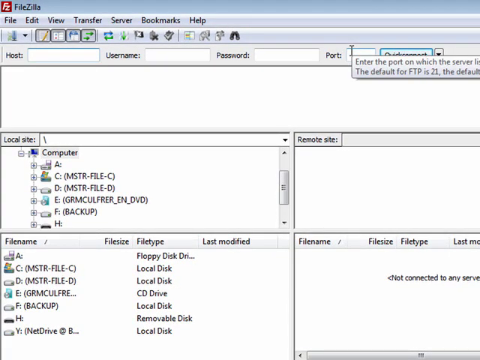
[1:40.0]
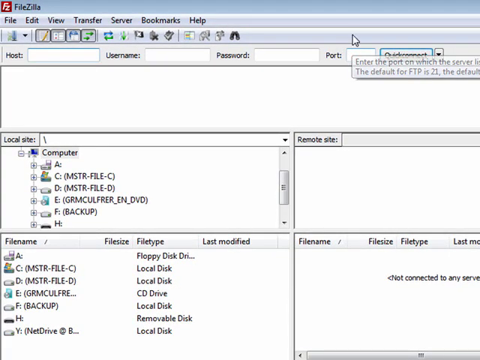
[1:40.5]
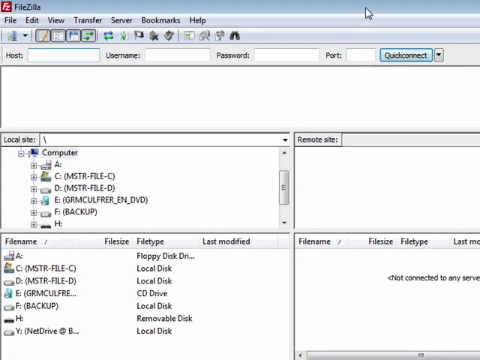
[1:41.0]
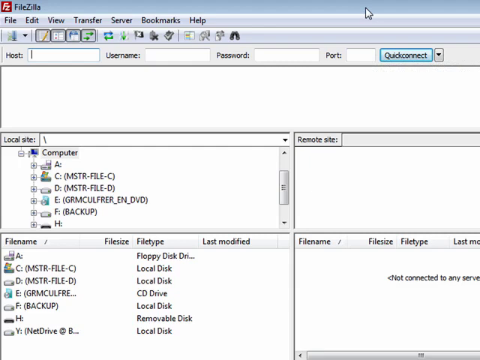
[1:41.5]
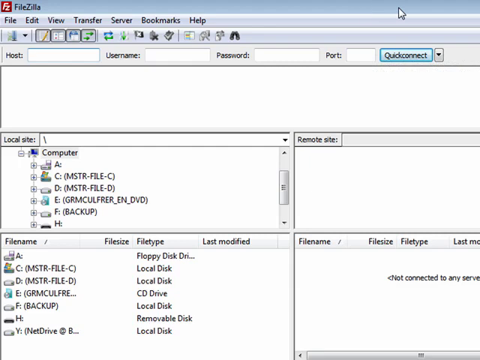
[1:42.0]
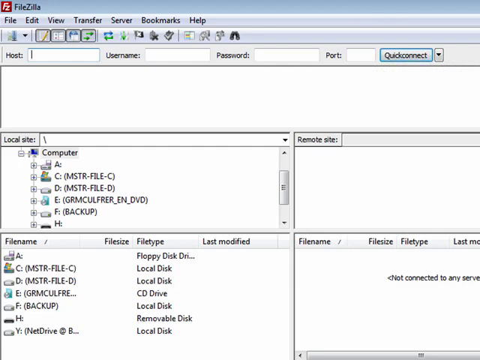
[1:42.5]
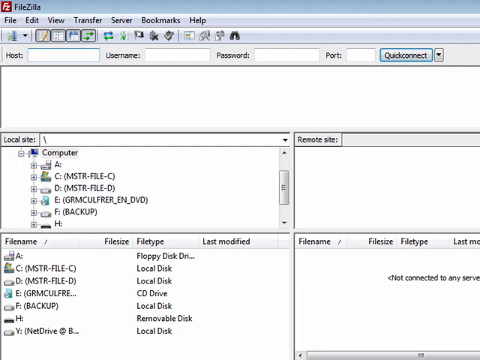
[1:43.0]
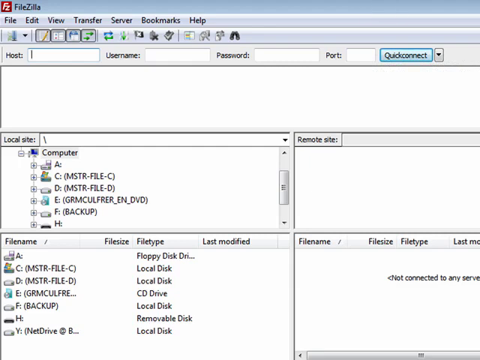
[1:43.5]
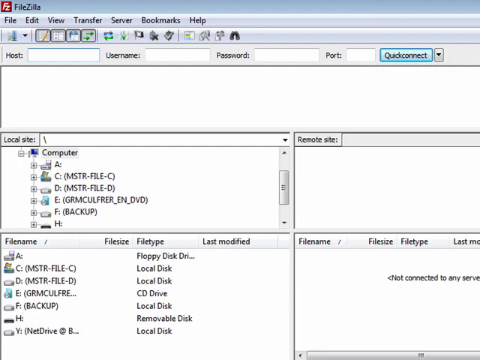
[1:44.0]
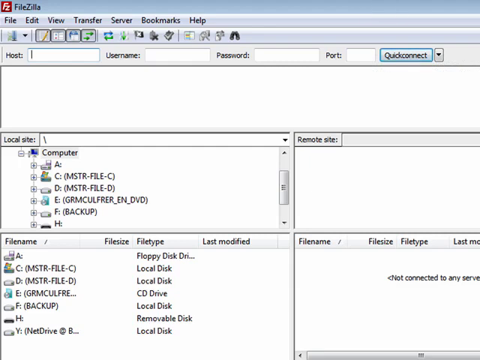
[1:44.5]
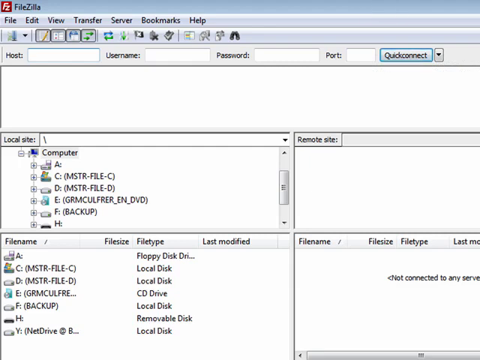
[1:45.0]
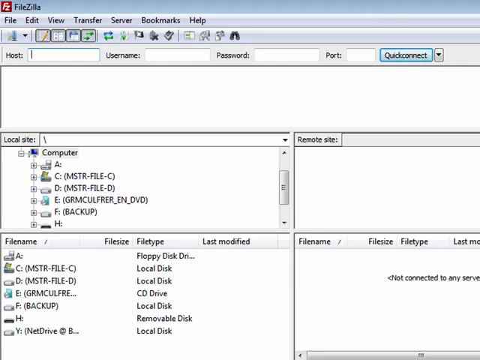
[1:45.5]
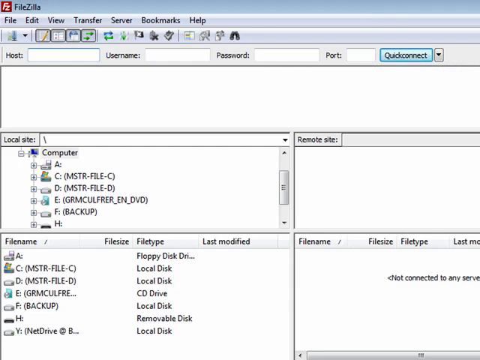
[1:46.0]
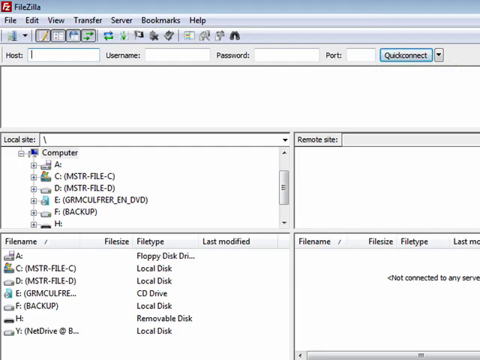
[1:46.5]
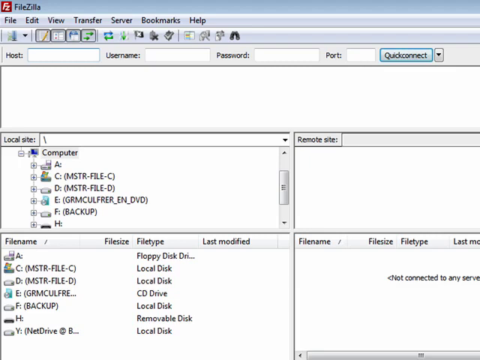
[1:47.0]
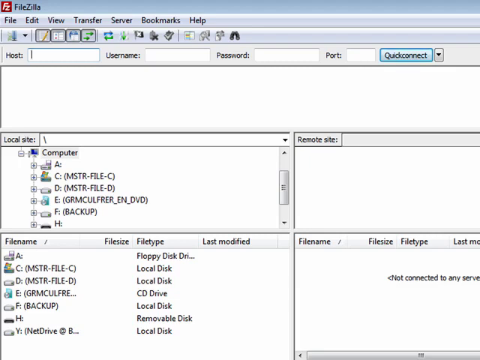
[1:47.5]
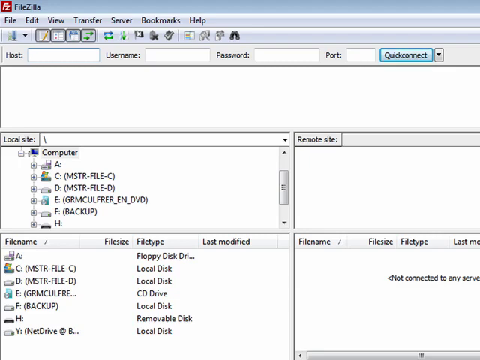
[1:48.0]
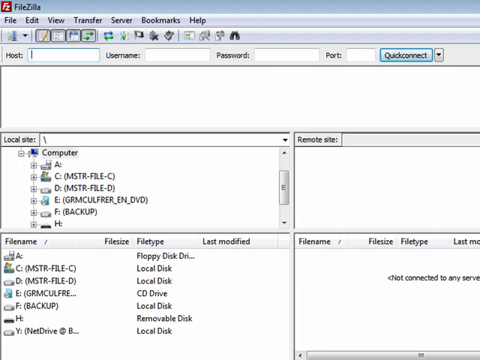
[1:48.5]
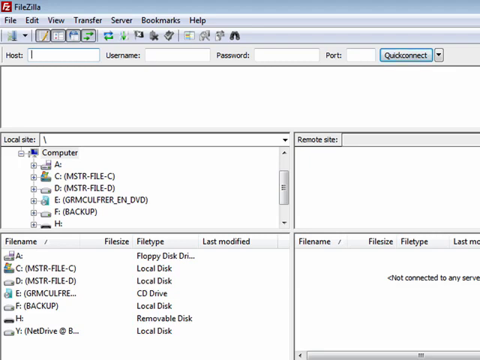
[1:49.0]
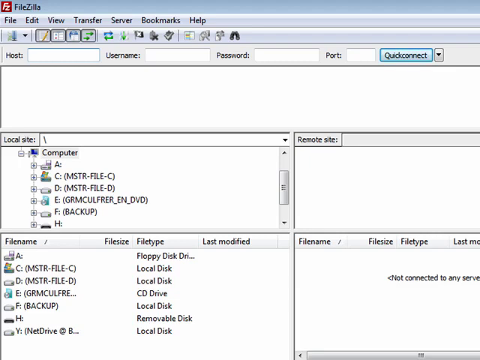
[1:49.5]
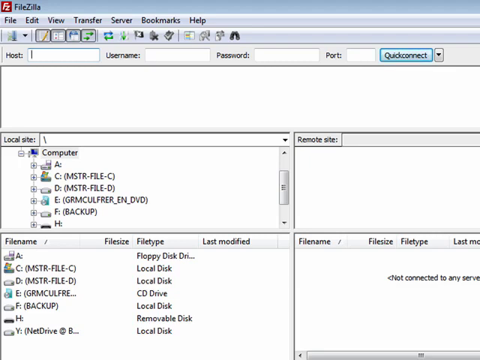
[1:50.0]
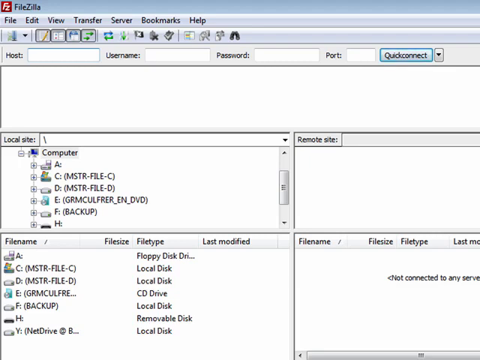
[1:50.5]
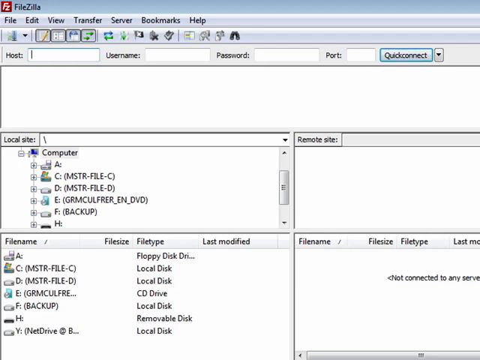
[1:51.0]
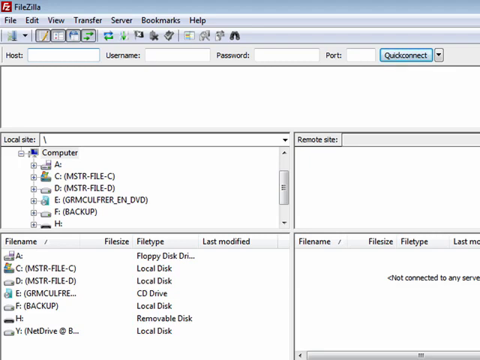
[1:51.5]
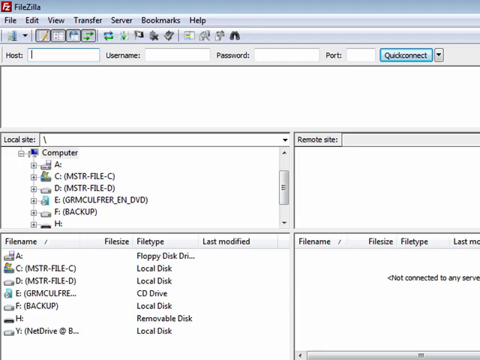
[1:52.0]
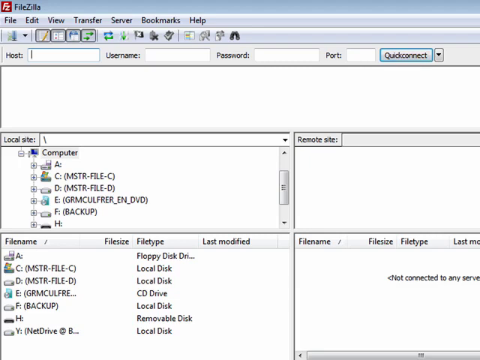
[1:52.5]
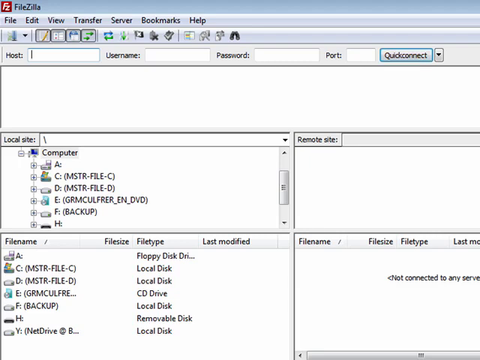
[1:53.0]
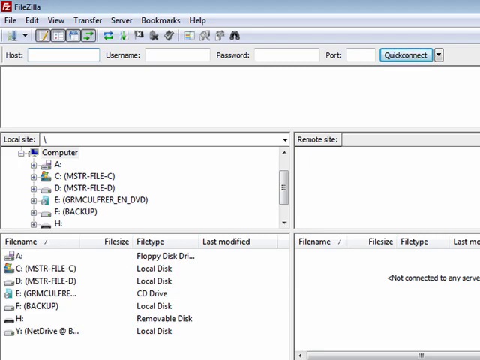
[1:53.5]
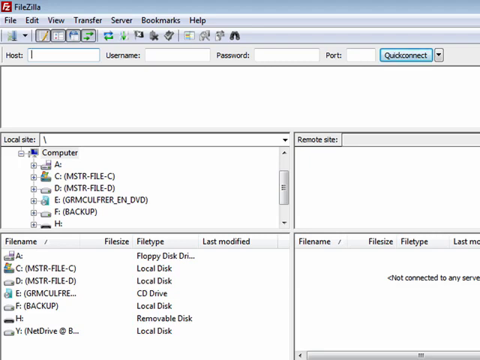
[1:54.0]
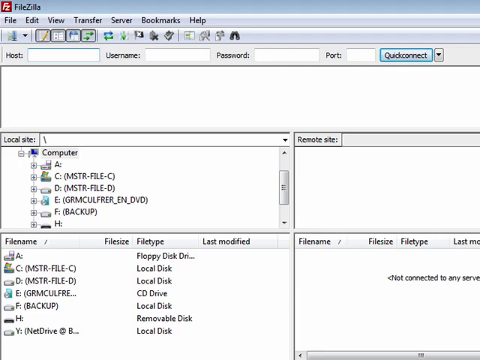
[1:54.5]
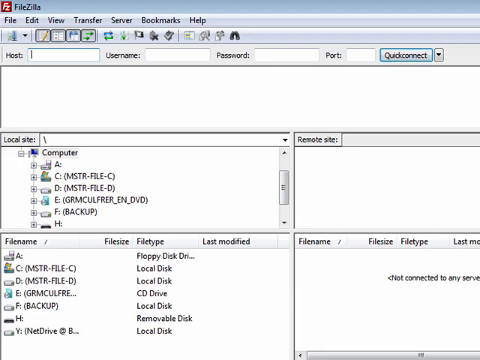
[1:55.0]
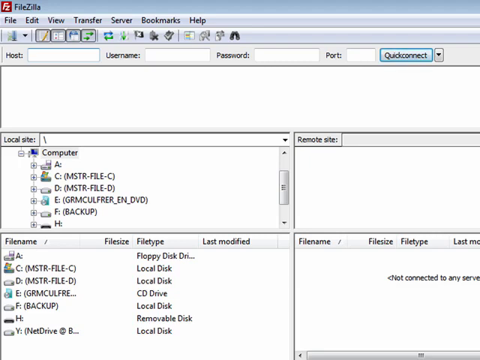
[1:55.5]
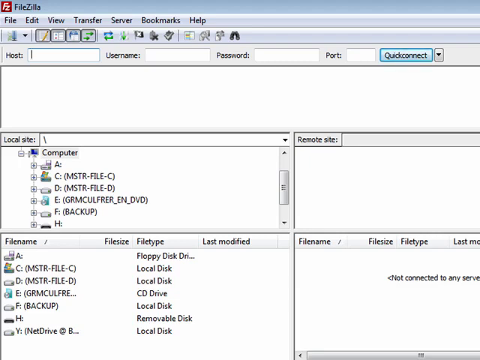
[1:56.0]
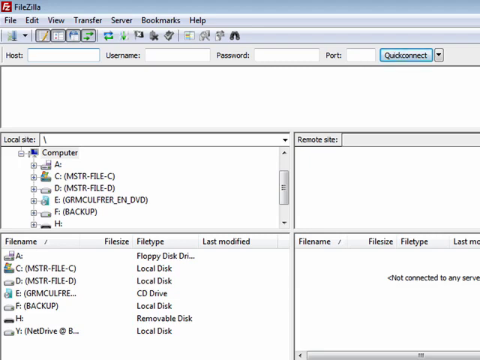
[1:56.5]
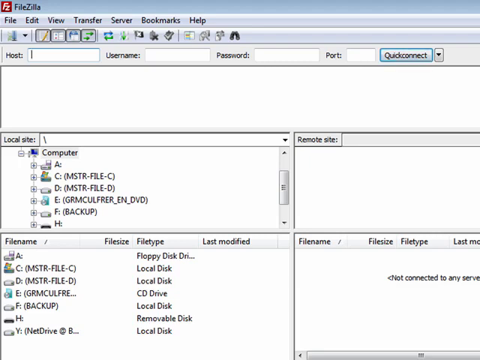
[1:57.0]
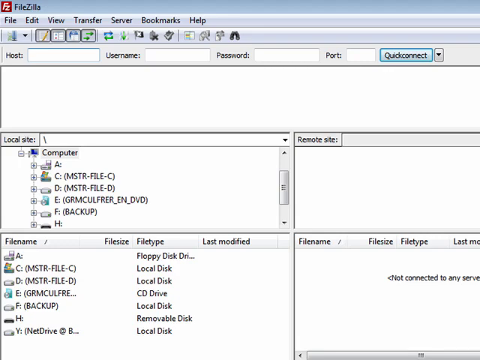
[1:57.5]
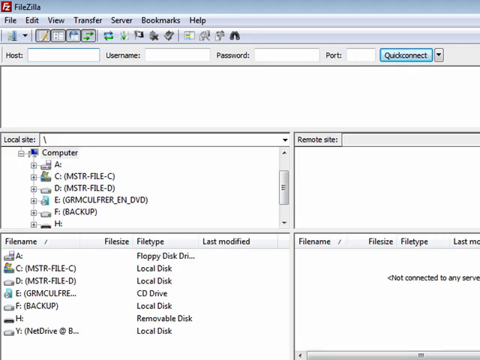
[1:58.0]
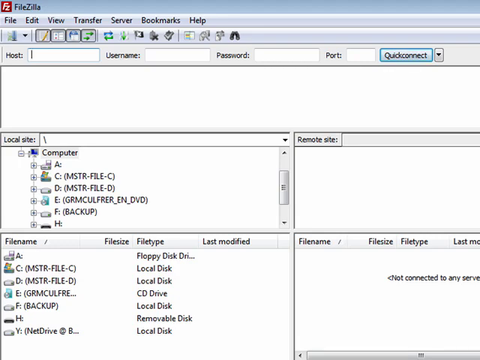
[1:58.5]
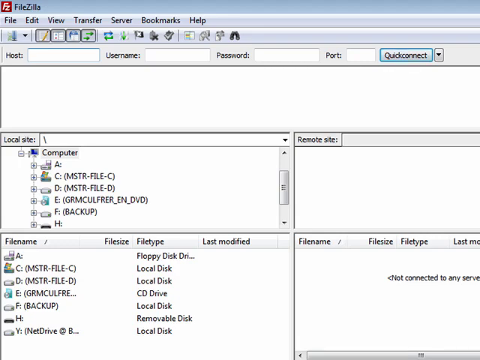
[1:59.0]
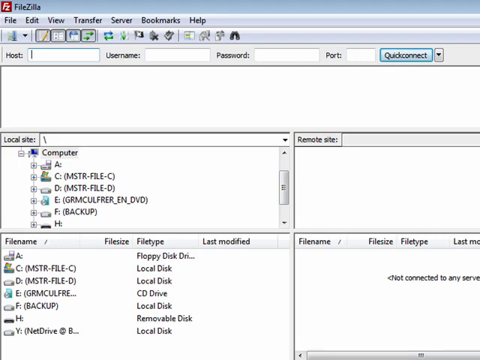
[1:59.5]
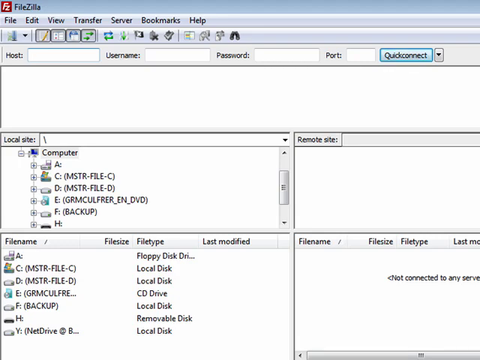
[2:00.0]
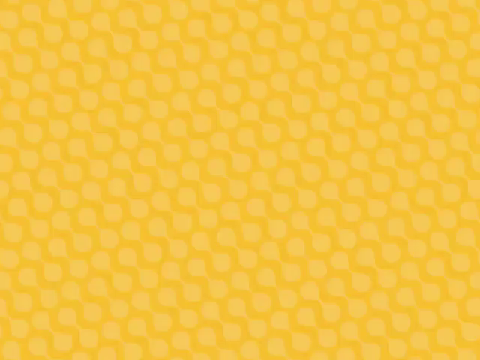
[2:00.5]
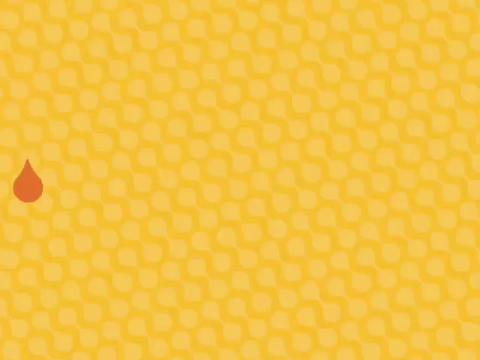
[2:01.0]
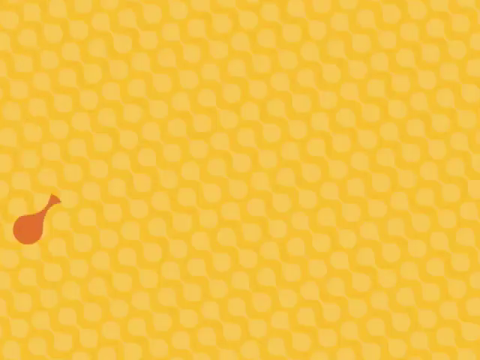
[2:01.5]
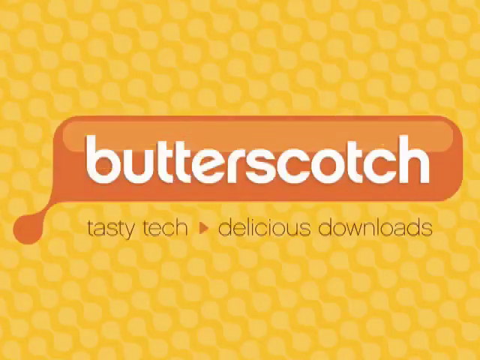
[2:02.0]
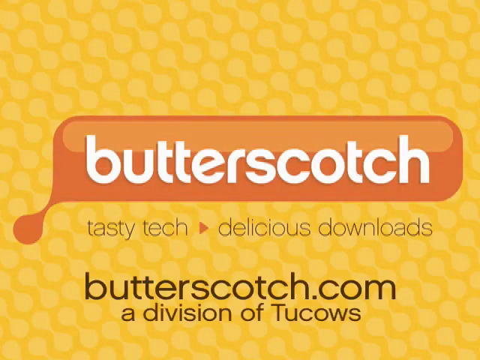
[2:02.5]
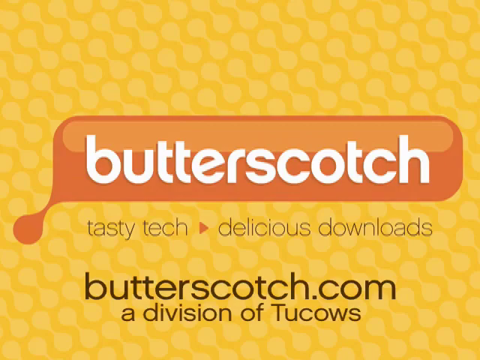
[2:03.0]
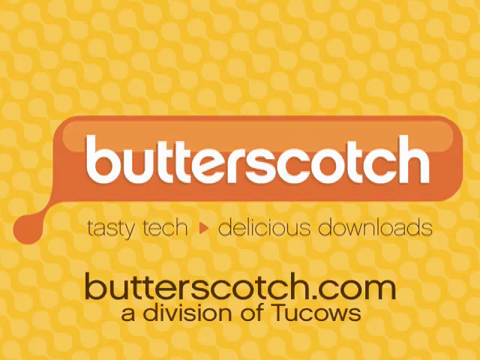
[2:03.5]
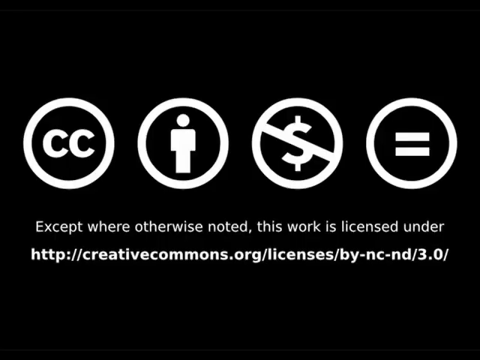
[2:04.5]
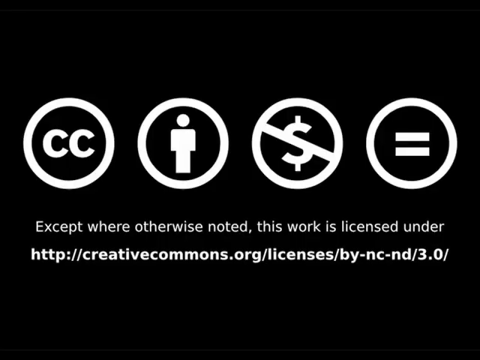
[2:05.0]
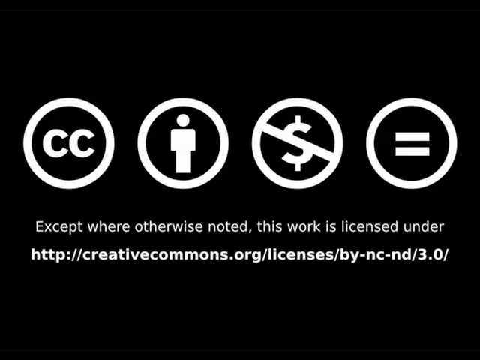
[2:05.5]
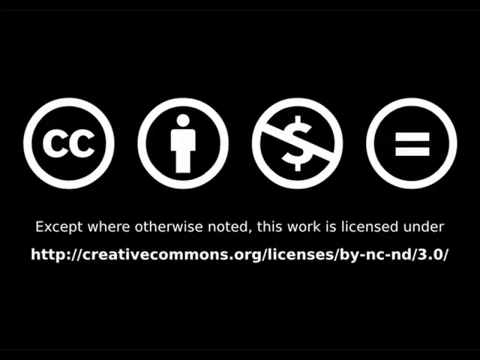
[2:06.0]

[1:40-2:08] A closer view shows an application window captured from a desktop computer. The screen shows the computer's various drives, including the floppy disk drive, local disk and CD drives. The mouse cursor is in a text entry bar titled "Host," and the cursor blinks inside the text box for a while. The video then ends with a yellow screen with circular designs in two tones of yellow. On a long rectangle with curved edges, white text reads "butterscotch." Below it, in dark brown, the text reads "tasty tech, delicious downloads." Below that a website pops up: "butterscotch.com, a division of Tucows."